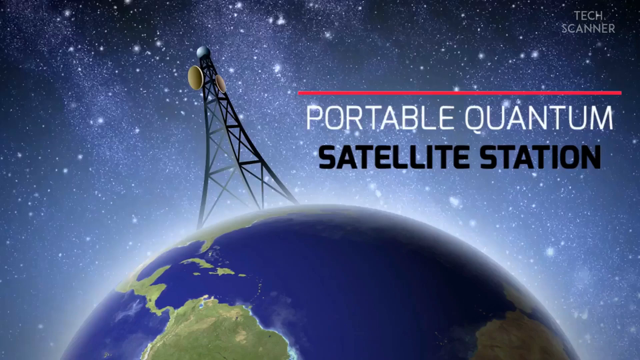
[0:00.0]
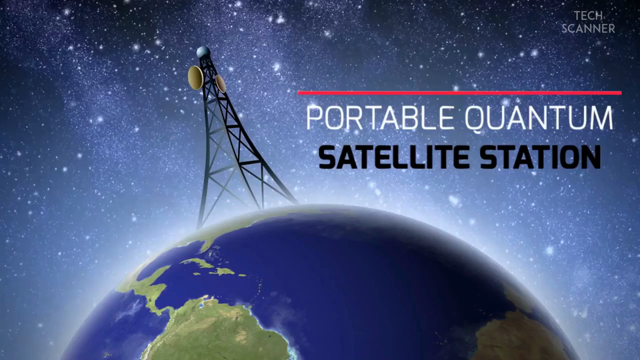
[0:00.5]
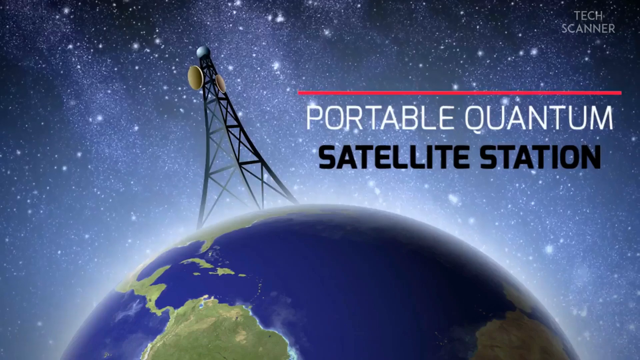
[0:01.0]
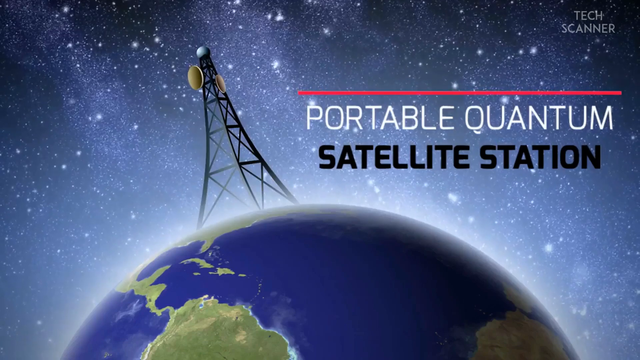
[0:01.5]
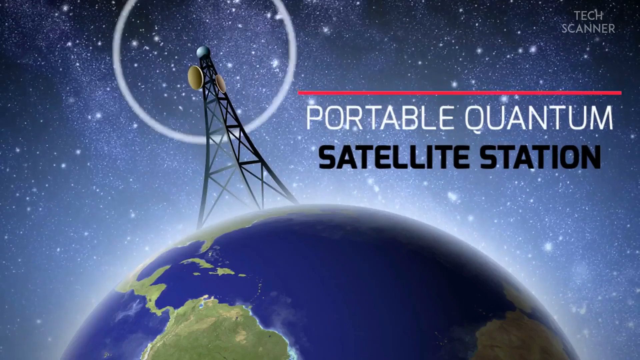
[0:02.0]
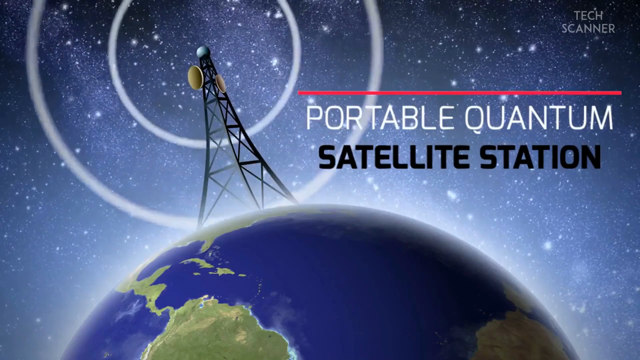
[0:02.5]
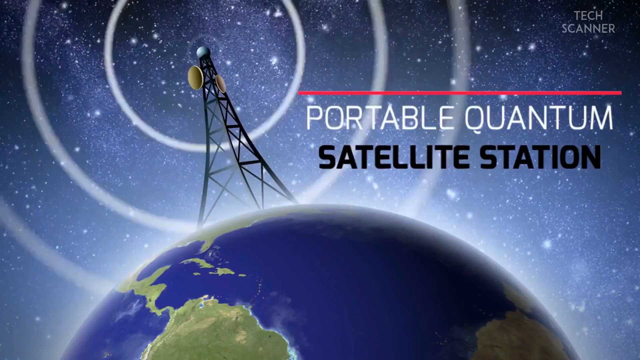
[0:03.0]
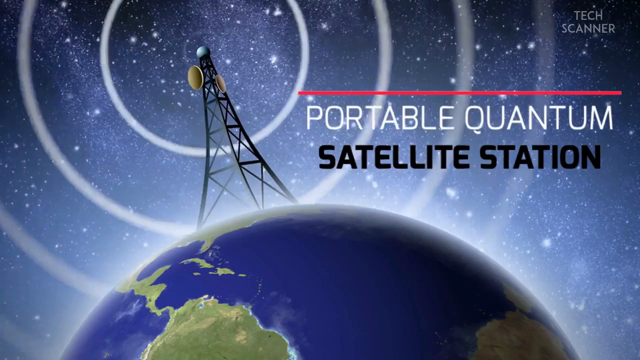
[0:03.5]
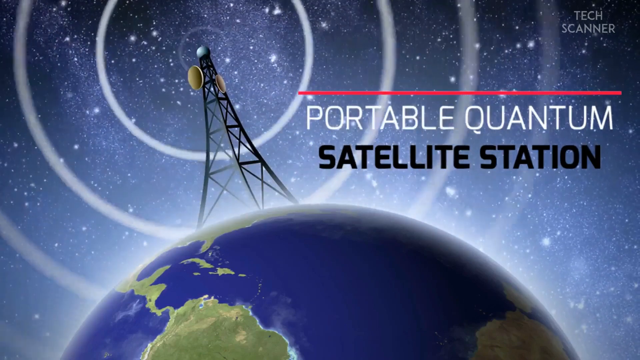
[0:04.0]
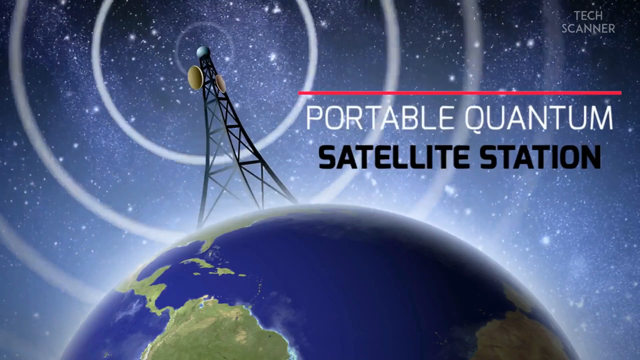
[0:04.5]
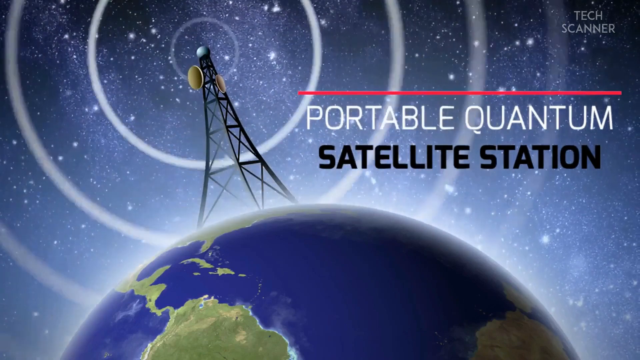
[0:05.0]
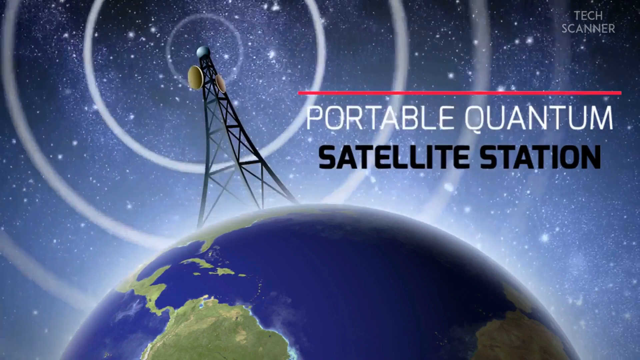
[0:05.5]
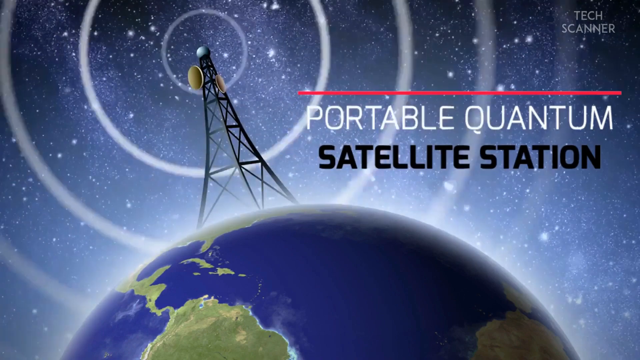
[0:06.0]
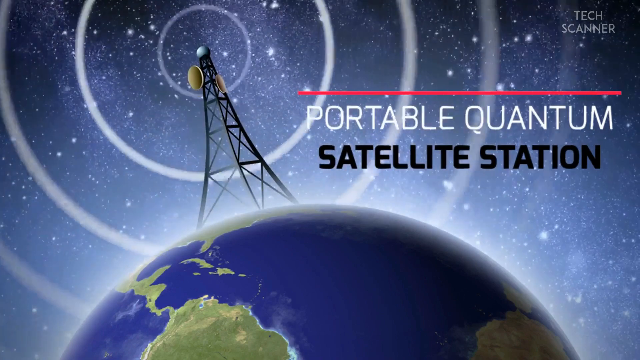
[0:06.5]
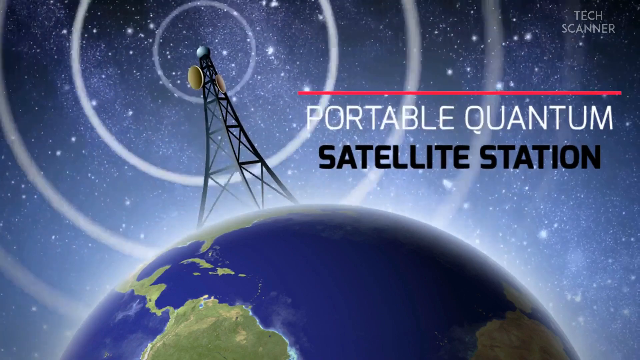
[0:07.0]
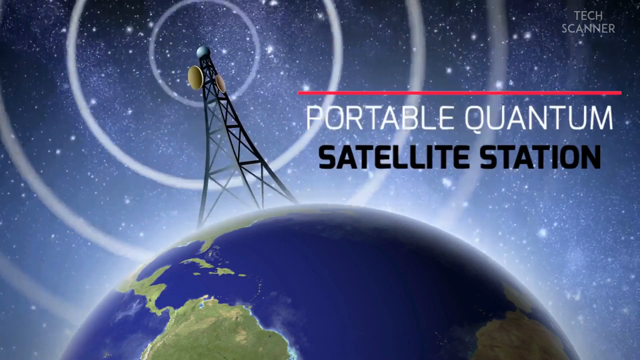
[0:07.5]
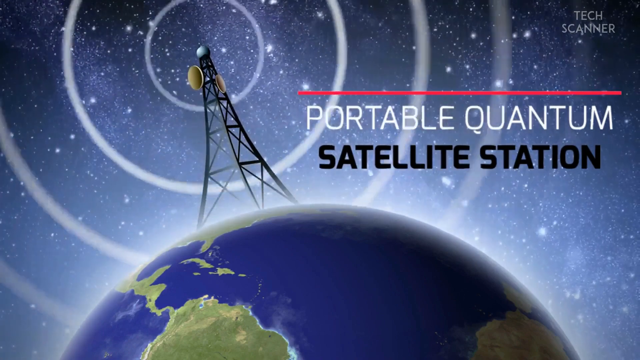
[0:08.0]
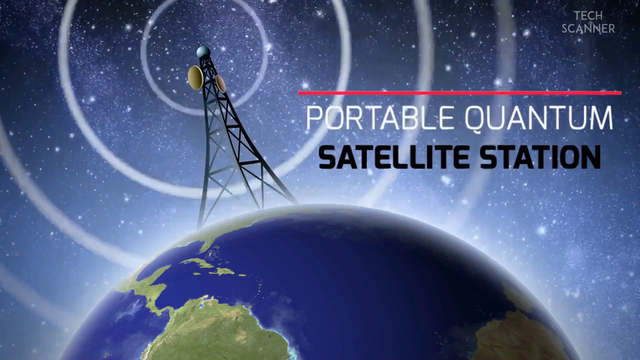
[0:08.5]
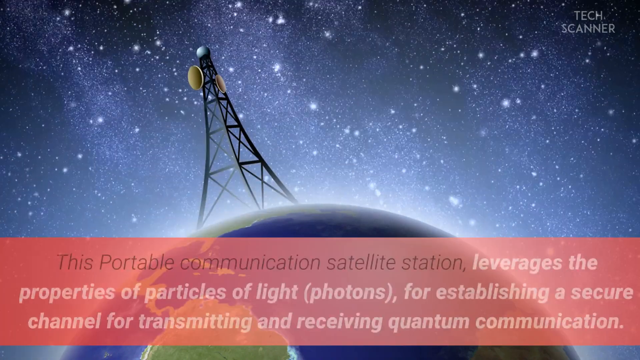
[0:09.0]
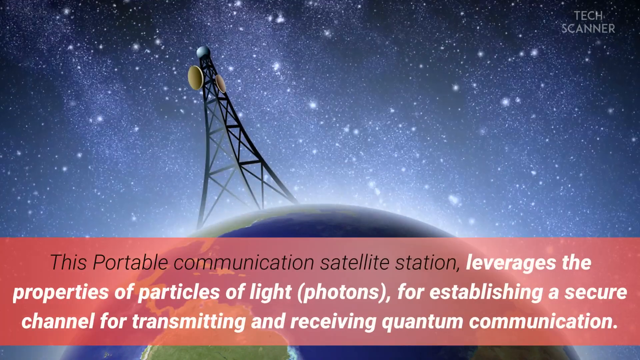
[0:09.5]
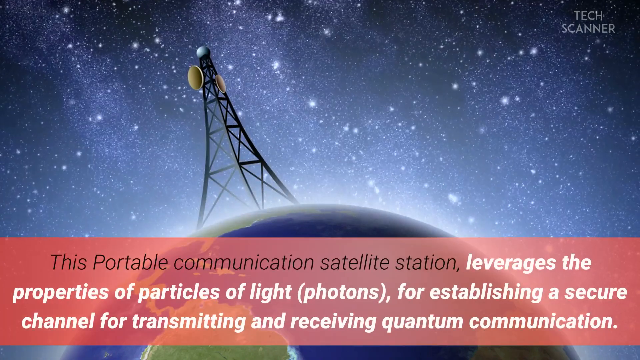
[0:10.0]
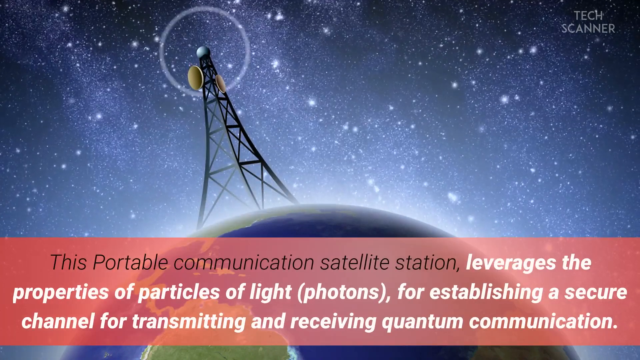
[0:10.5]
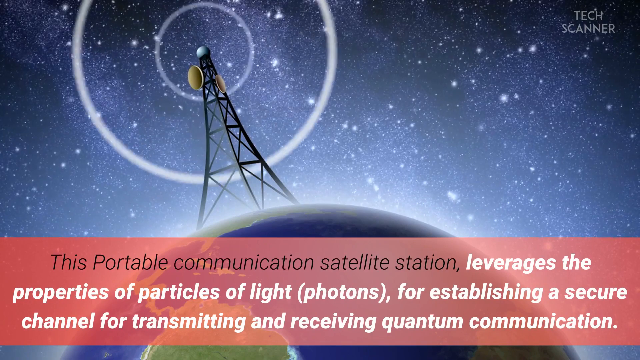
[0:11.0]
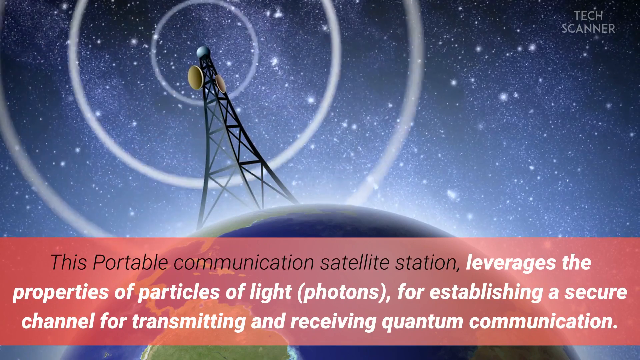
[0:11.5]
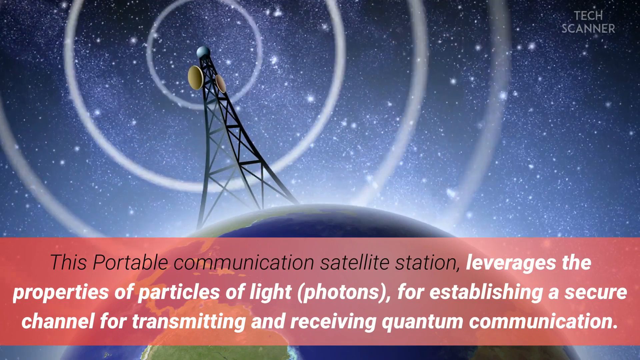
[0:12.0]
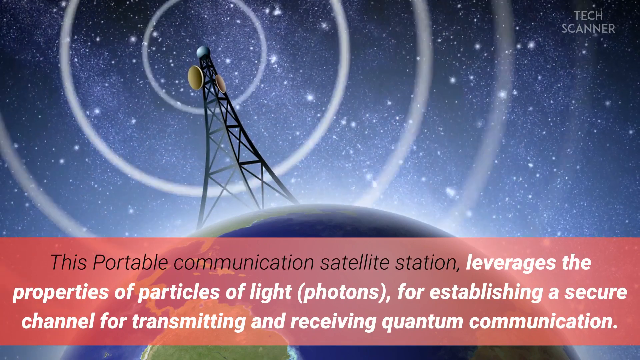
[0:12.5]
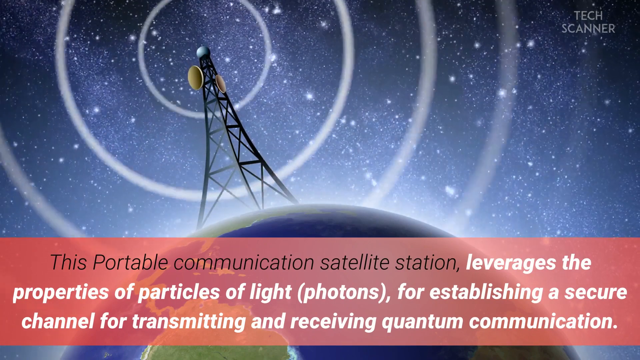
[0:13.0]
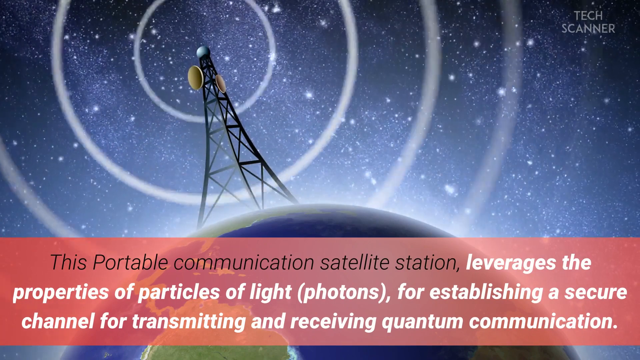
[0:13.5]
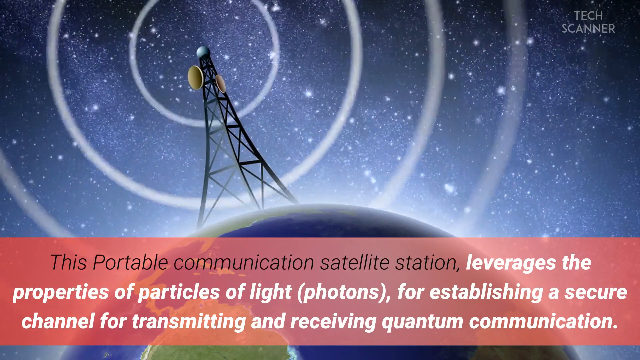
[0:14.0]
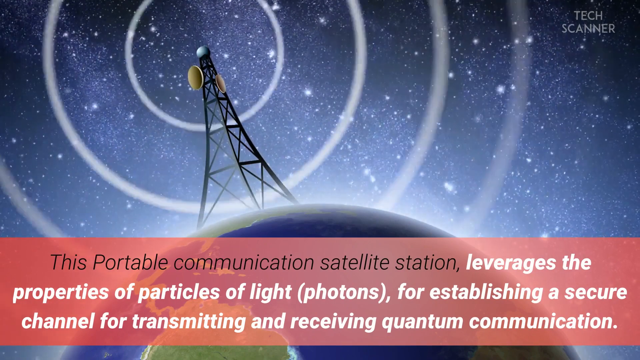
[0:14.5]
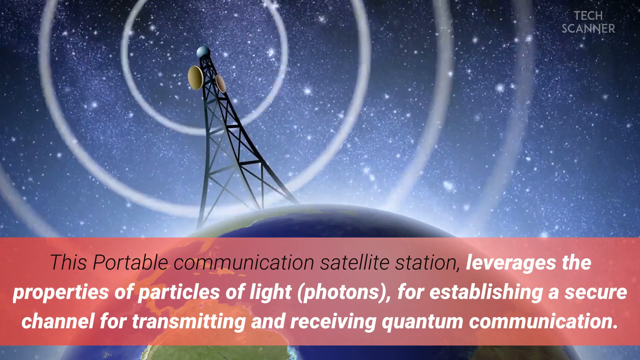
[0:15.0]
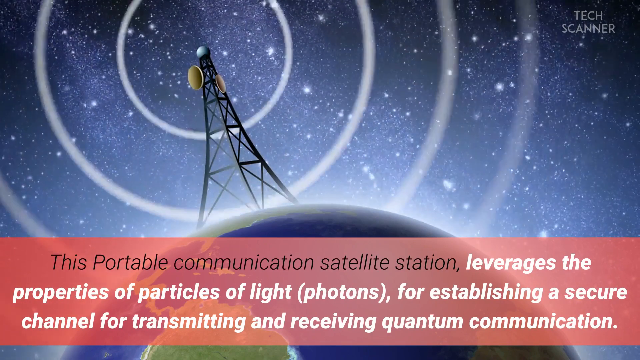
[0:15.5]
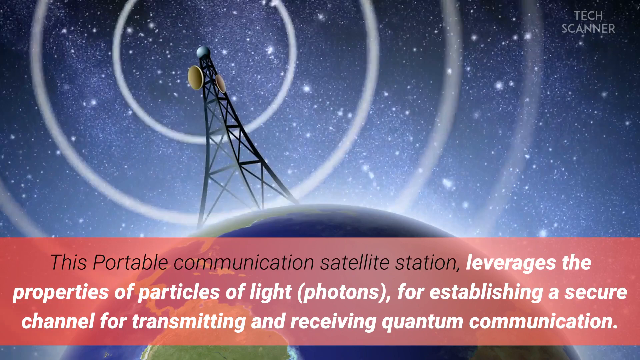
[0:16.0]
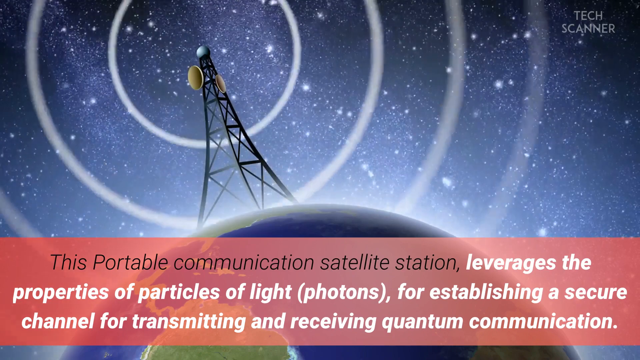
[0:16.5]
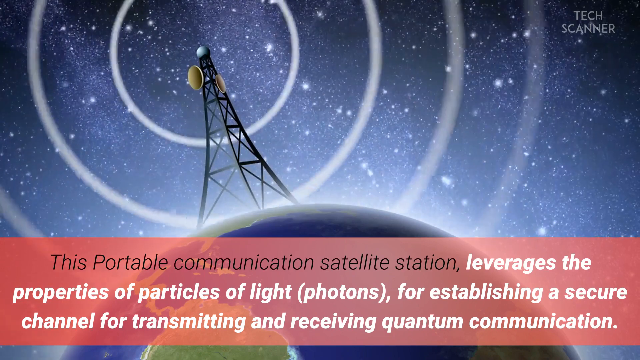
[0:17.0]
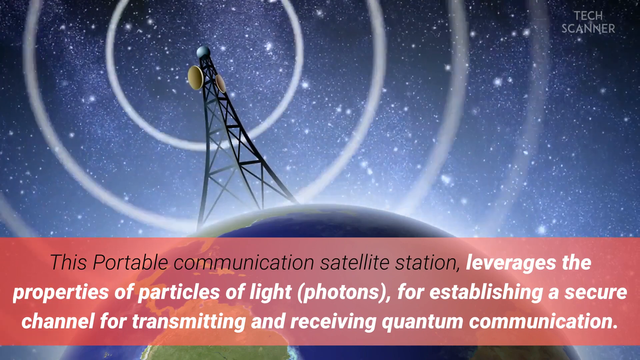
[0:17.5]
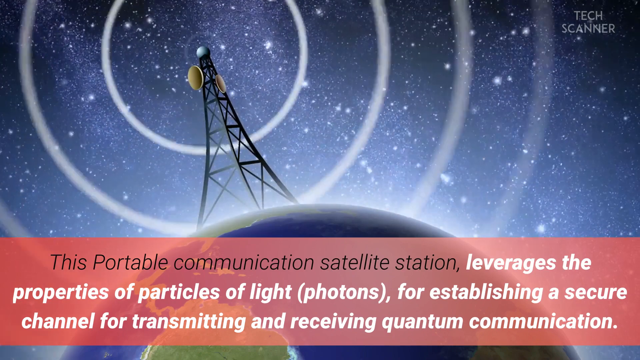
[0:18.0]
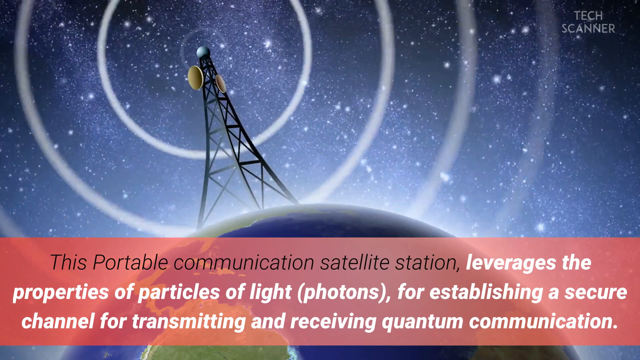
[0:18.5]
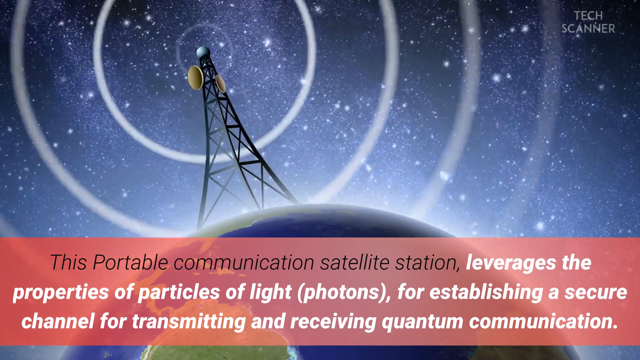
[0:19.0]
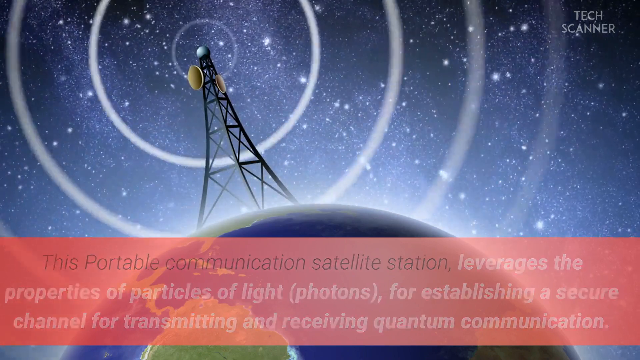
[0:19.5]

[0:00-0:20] A space scene shows a blue sky full of stars, solar systems and constellations, with the Earth centered at the bottom of the screen. Coming out of the upper left-hand side of the Earth is something like a radio signal tower, and to the right of it the text reads "Portable Quantum Satellite Station." In the upper right-hand corner it says "Tech Scanner." A series of circles comes out from the radio tower, like old-time illustrations of sound waves. A red box then comes out across the bottom of the screen reading "This Portable Communication Satellite Station leverages the properties of particles of light (photons)" followed by, in parentheses, "for establishing a secure channel for transmitting and receiving quantum communications." The first part, "This Portable Communication Satellite Station," is written in black, and the rest is in white. The circles keep coming out of the radio tower, indicating radio waves.